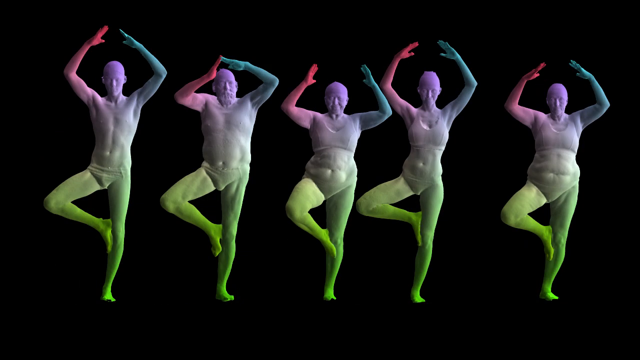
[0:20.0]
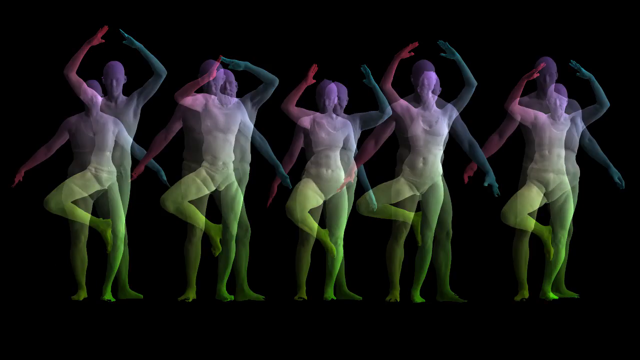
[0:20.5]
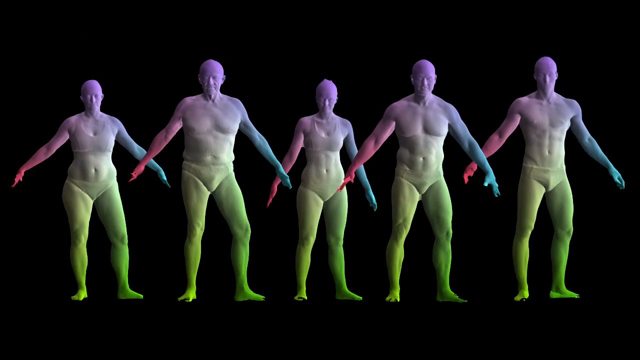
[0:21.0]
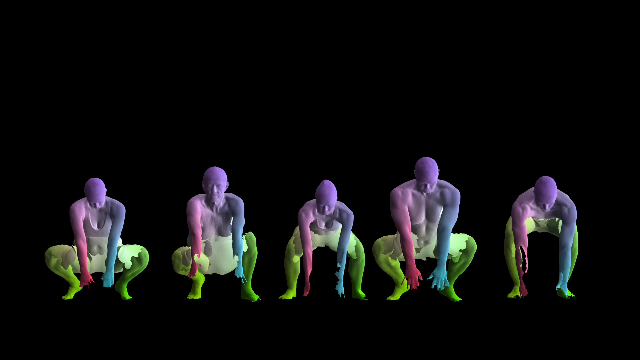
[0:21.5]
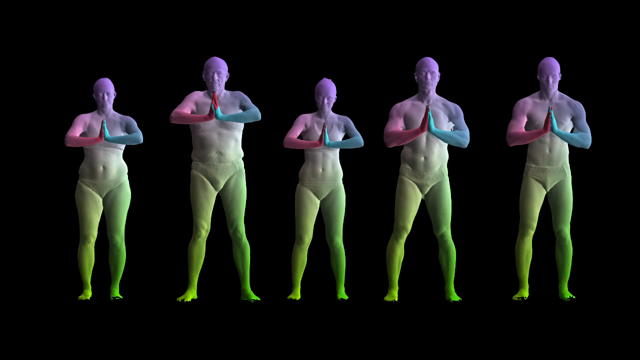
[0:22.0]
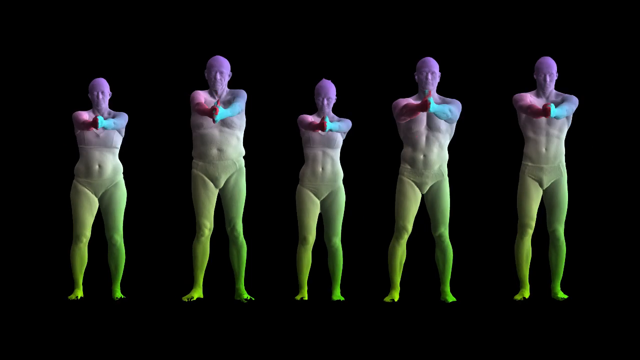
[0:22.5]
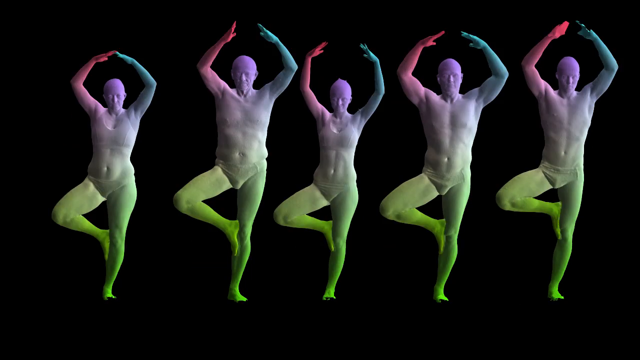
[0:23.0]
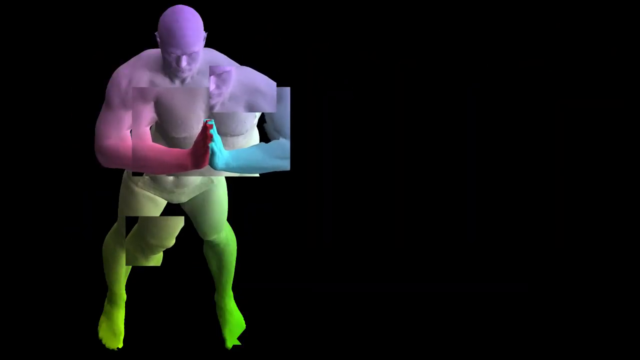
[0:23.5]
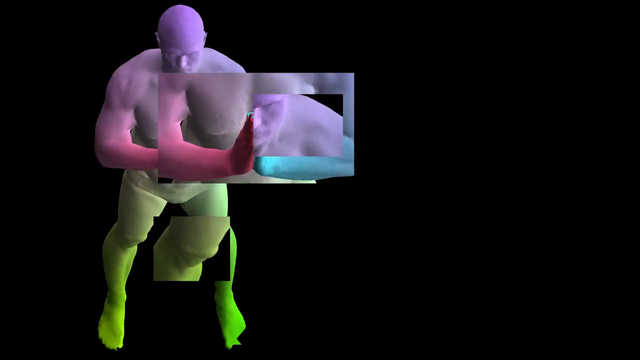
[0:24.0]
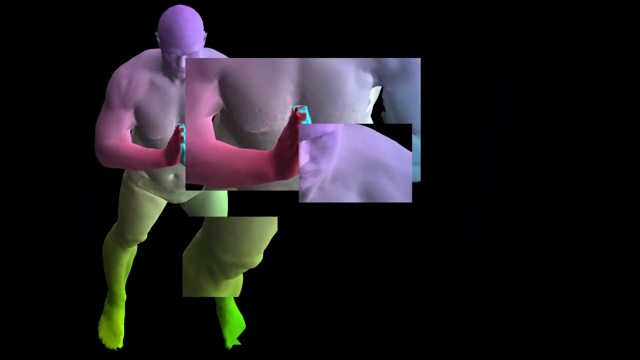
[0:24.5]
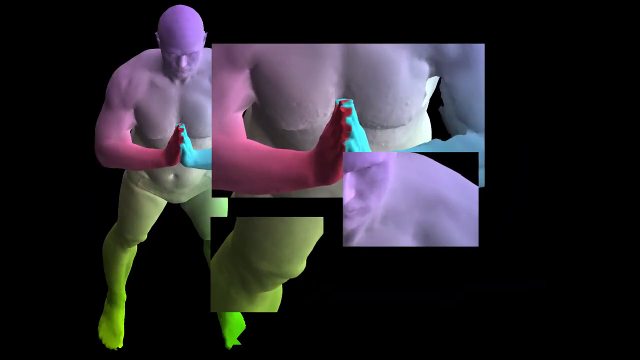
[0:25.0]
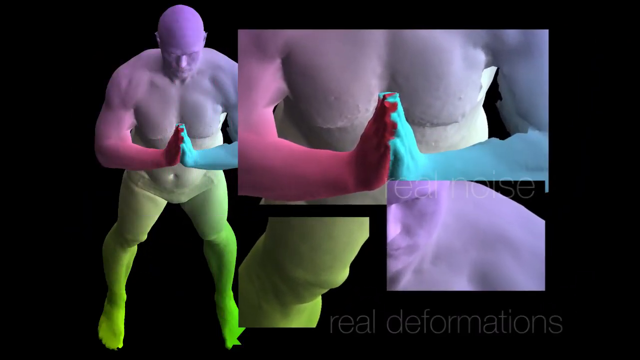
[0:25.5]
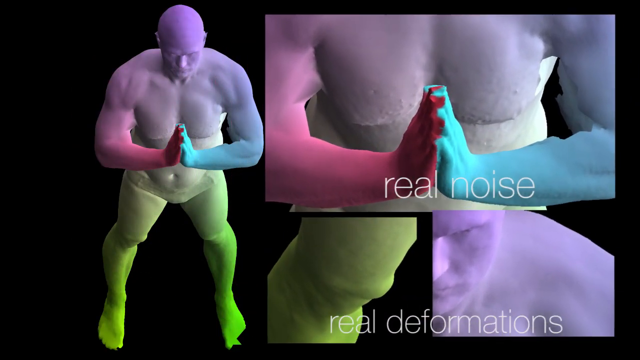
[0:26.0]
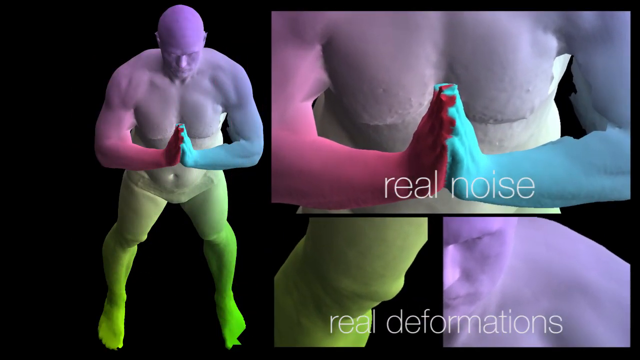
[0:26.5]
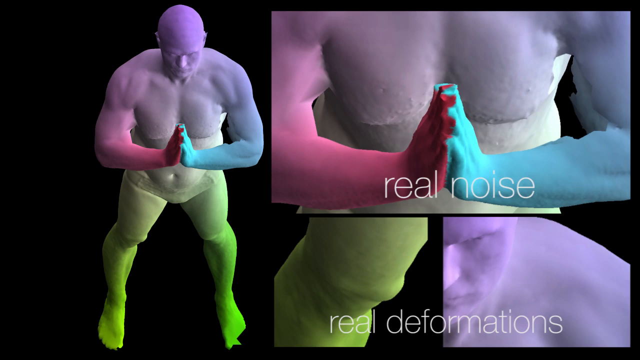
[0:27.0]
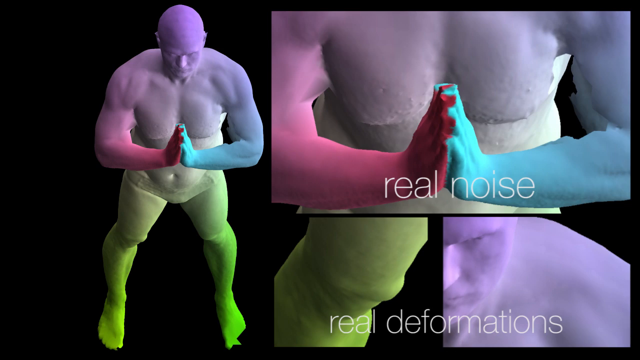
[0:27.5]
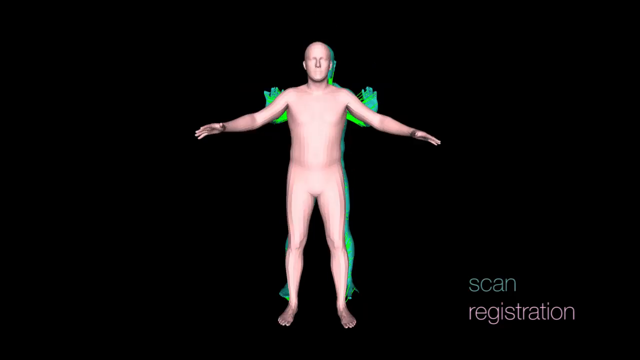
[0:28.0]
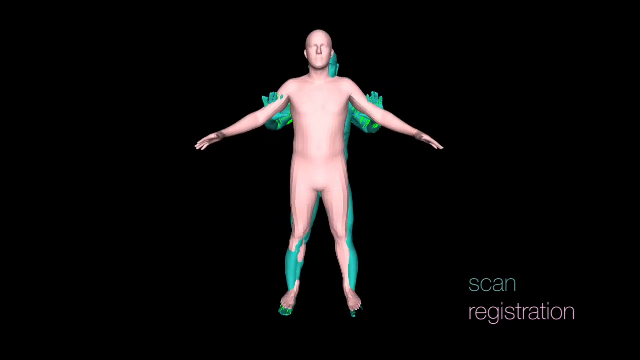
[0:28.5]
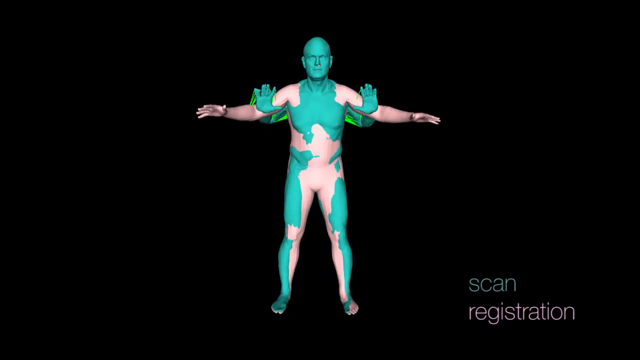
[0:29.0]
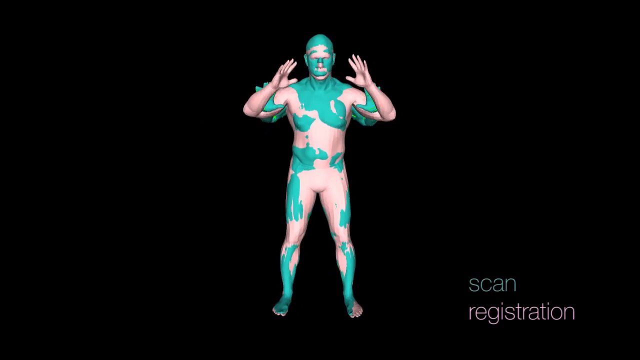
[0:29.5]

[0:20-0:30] Individuals with different body sizes do different exercises. They do uniform or similar exercises, going up and down, and seem to be squatting; they seem to have their left leg on top of their right leg with both hands up, and seem to practice continuously changing positions, moving their bodies up and down in ballet positions. One of them is then zoomed in on and indicated as real nose. Their hands are zoomed in on and the colours of their bodies are shown: the left hand is pink and the right hand is blue. Lastly, a man in front is shown, pink, with both hands up.